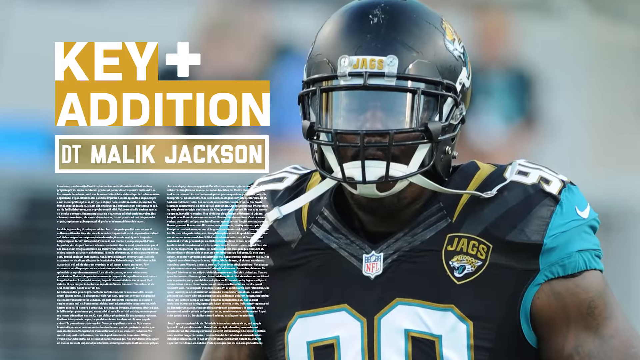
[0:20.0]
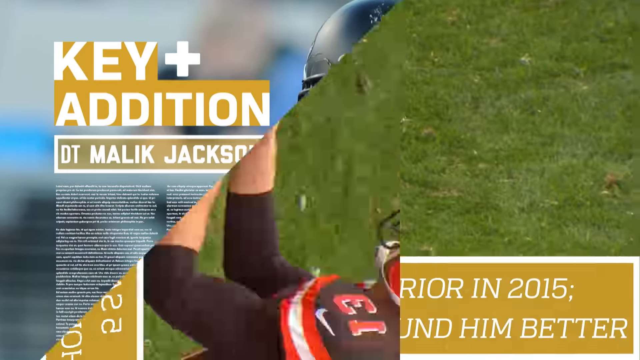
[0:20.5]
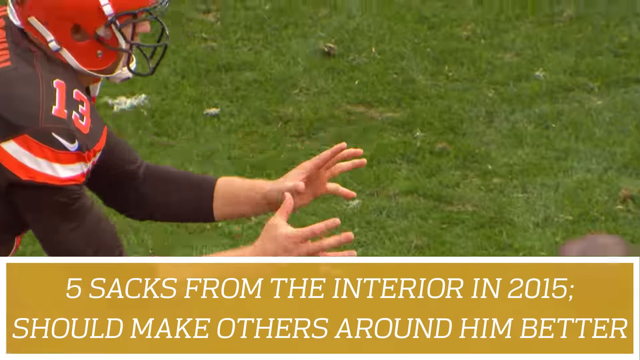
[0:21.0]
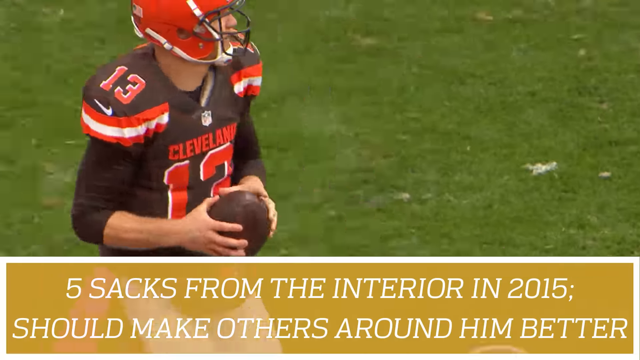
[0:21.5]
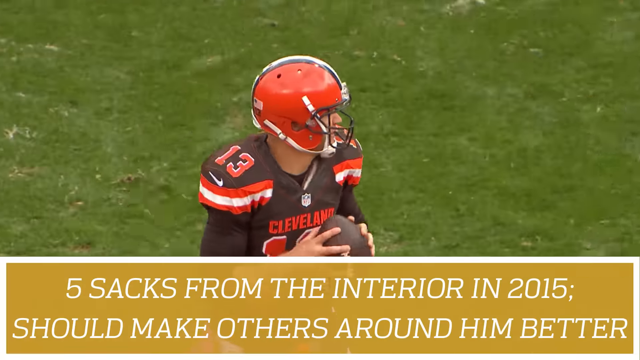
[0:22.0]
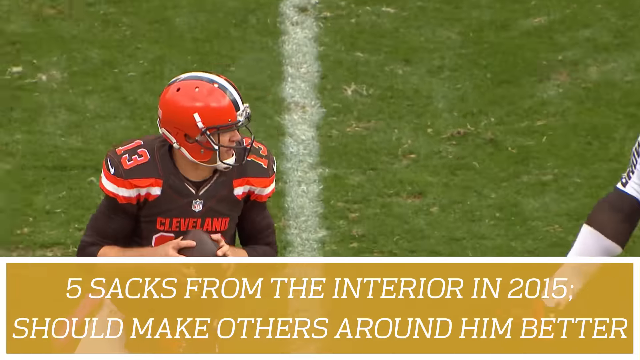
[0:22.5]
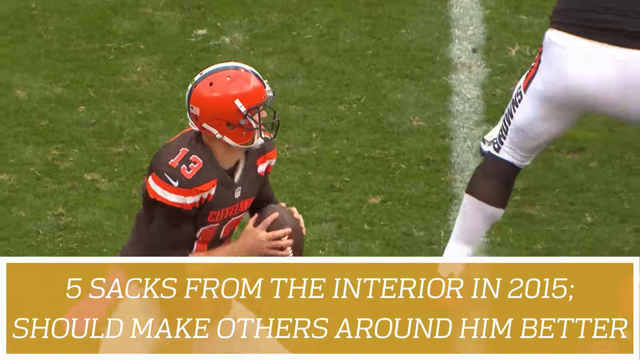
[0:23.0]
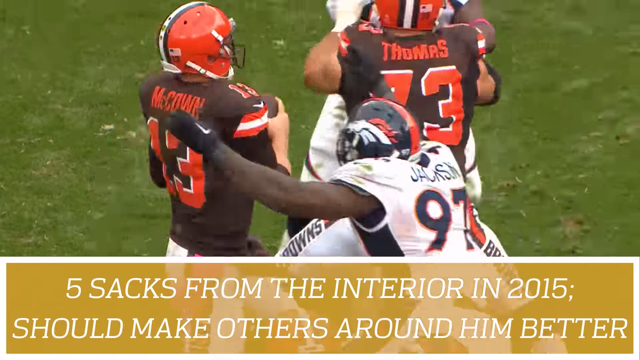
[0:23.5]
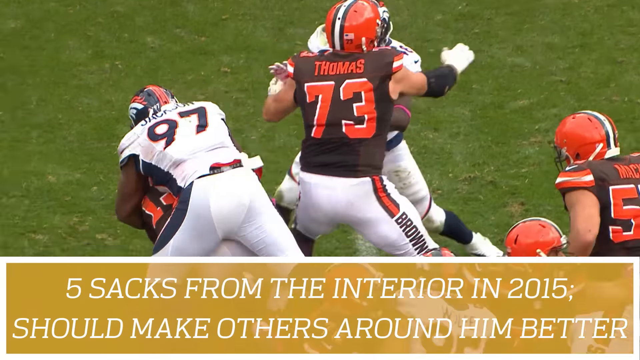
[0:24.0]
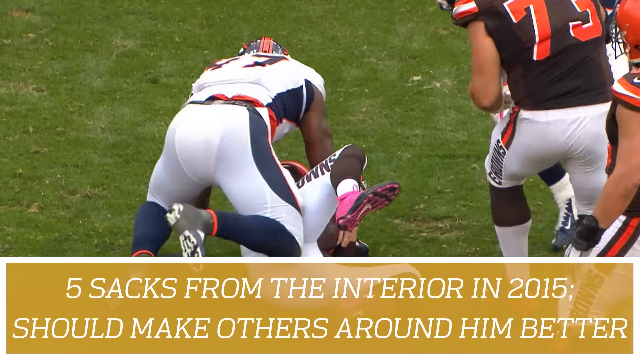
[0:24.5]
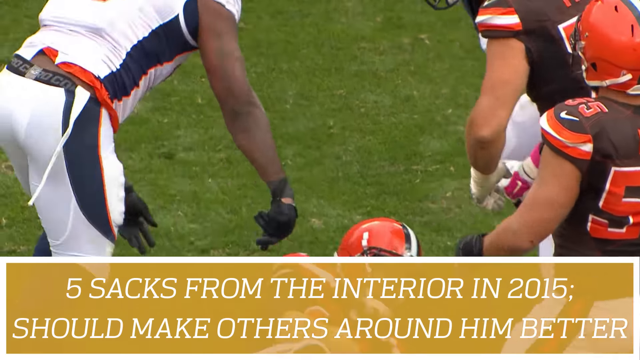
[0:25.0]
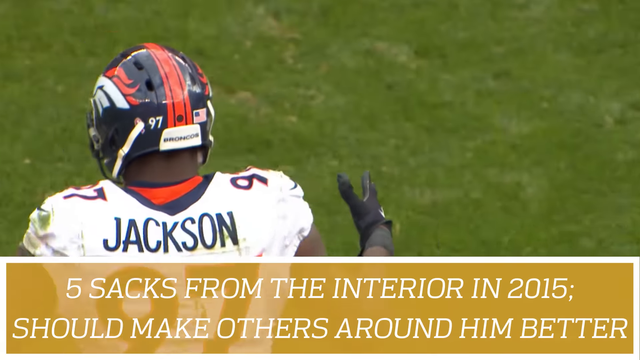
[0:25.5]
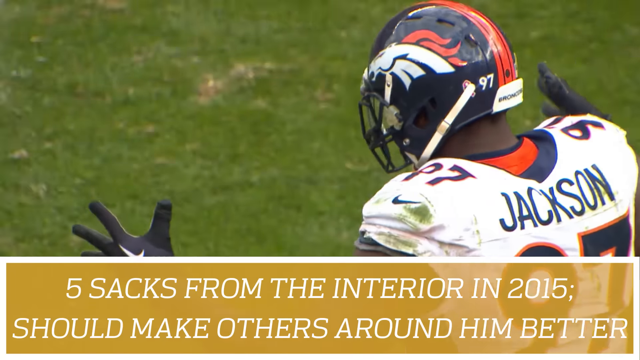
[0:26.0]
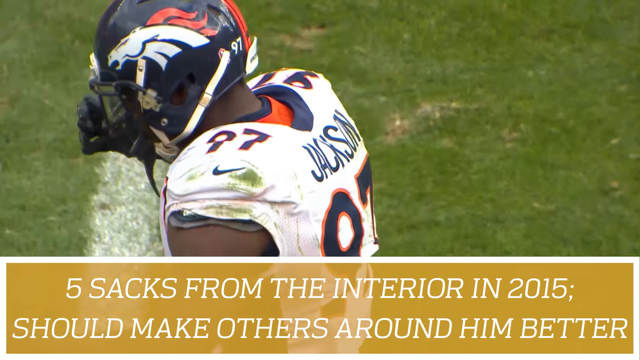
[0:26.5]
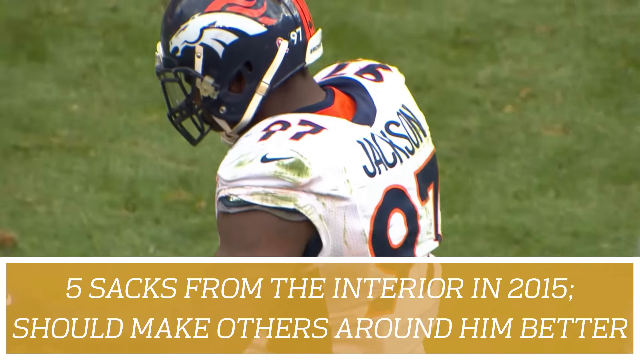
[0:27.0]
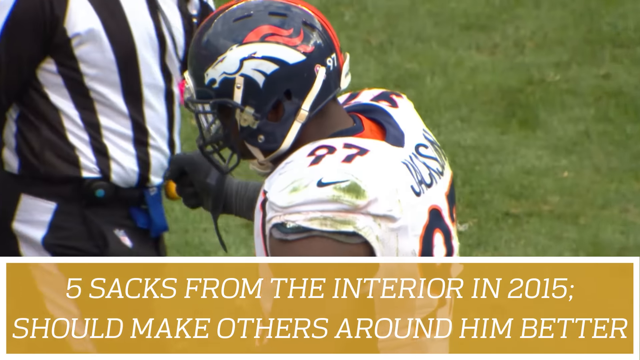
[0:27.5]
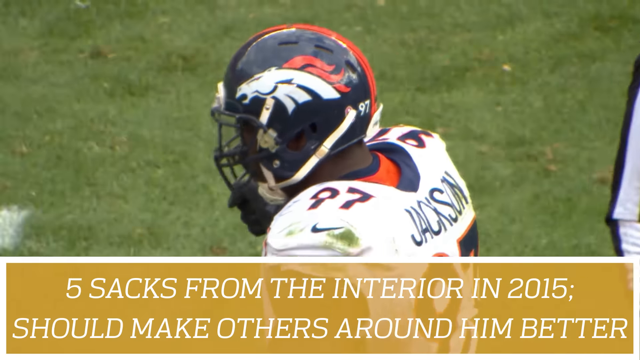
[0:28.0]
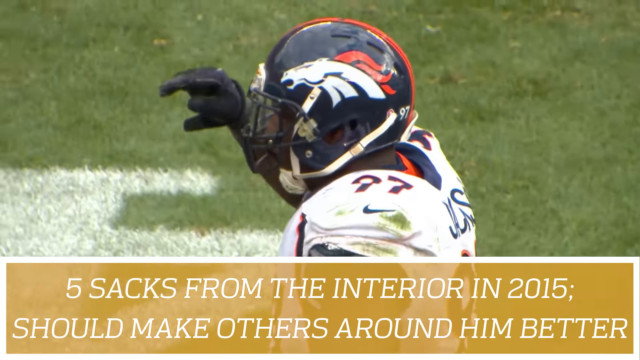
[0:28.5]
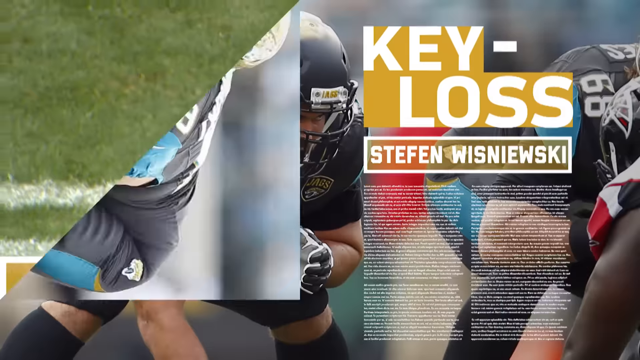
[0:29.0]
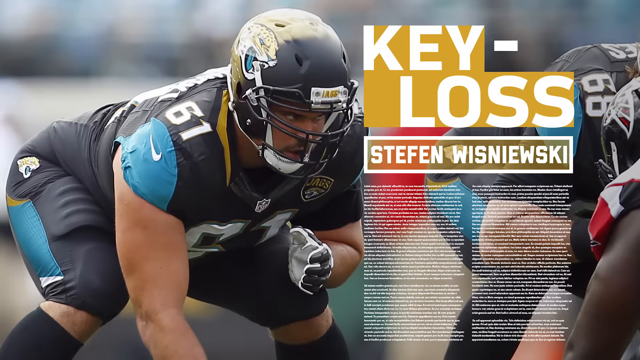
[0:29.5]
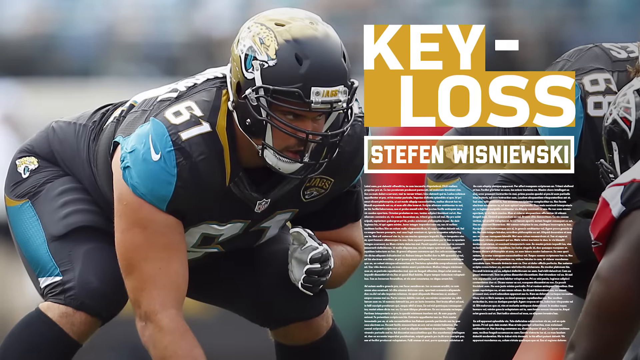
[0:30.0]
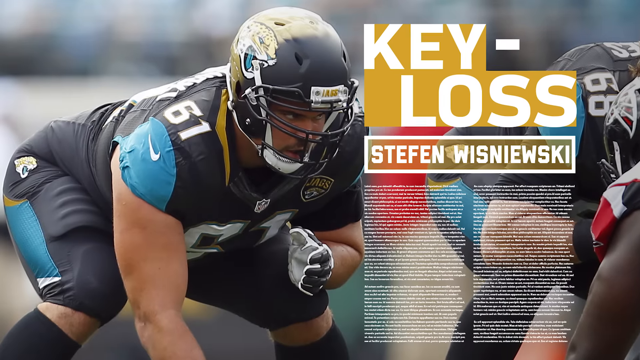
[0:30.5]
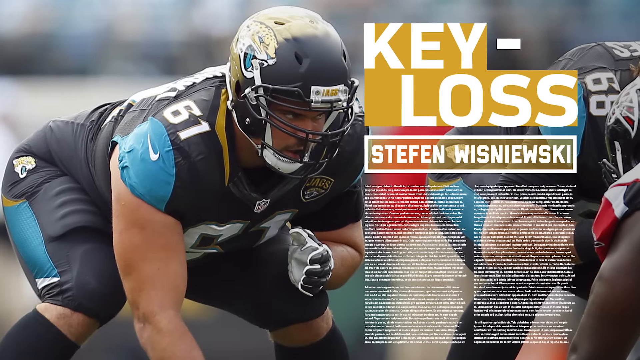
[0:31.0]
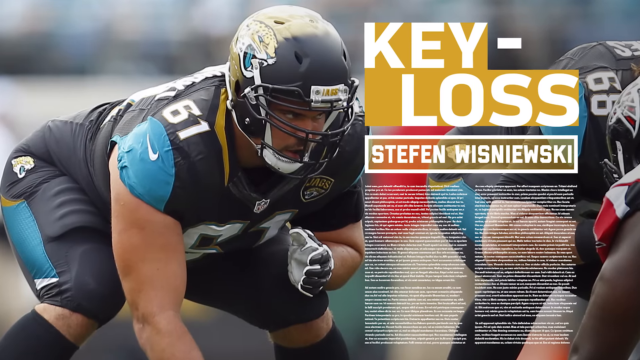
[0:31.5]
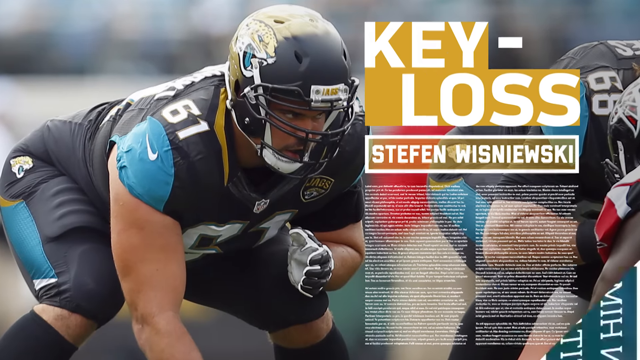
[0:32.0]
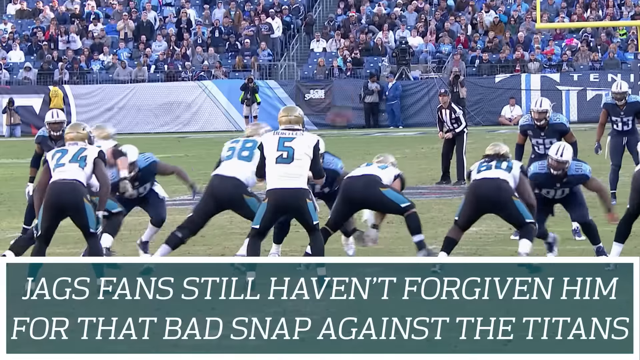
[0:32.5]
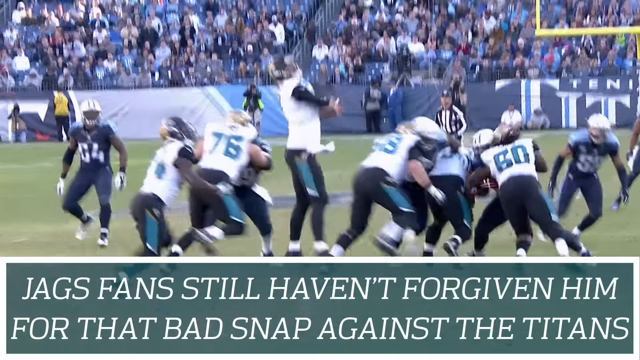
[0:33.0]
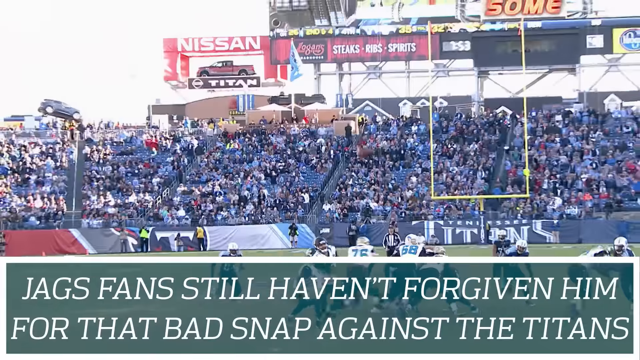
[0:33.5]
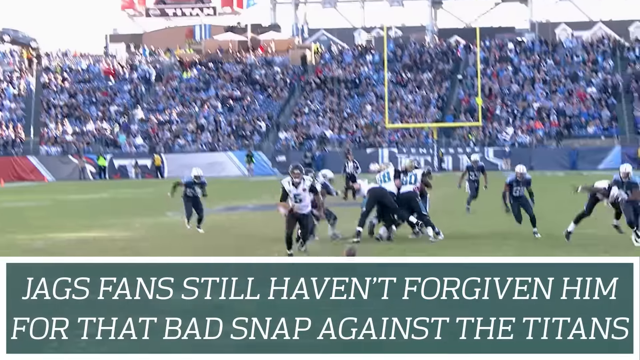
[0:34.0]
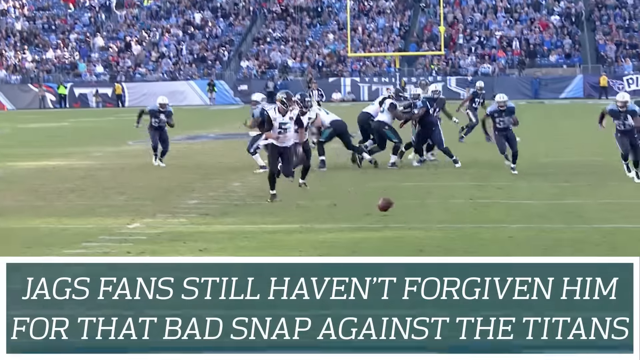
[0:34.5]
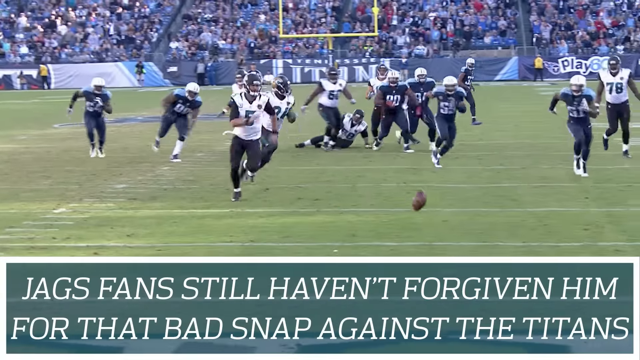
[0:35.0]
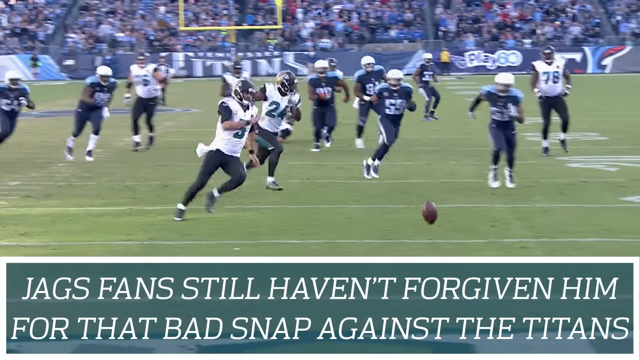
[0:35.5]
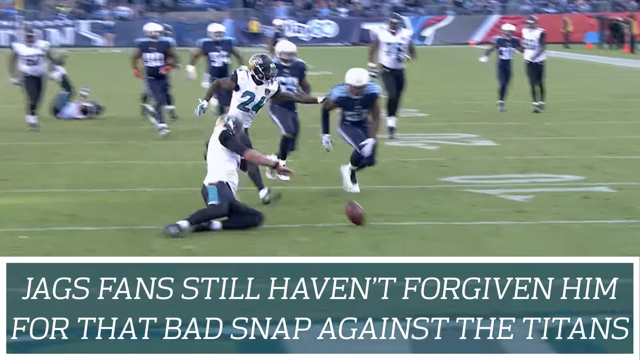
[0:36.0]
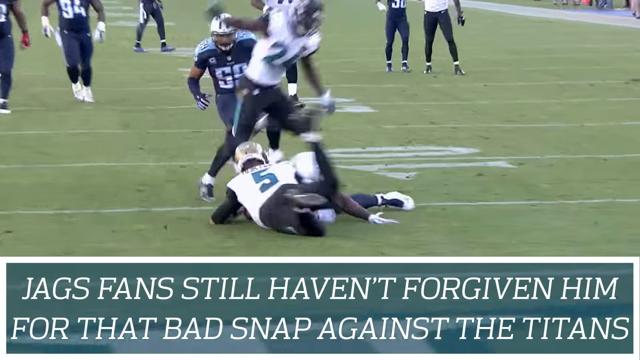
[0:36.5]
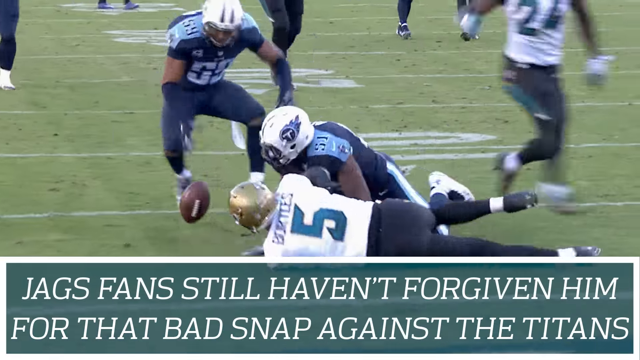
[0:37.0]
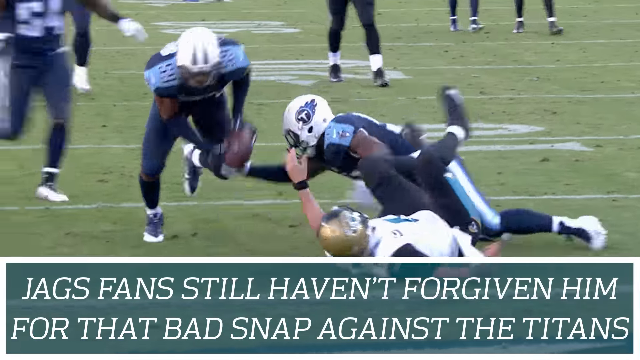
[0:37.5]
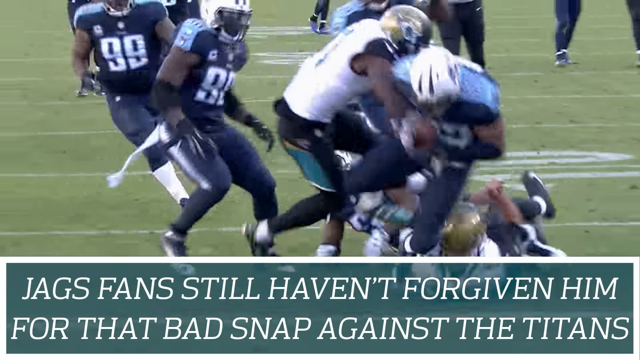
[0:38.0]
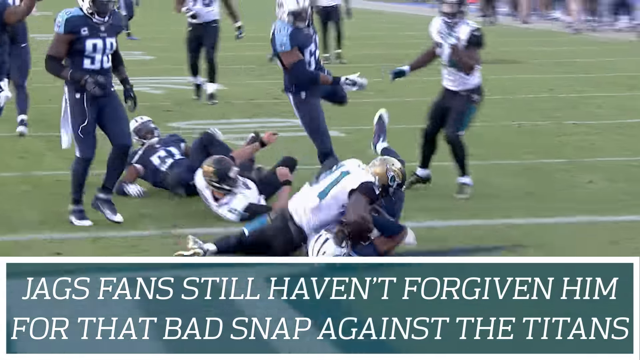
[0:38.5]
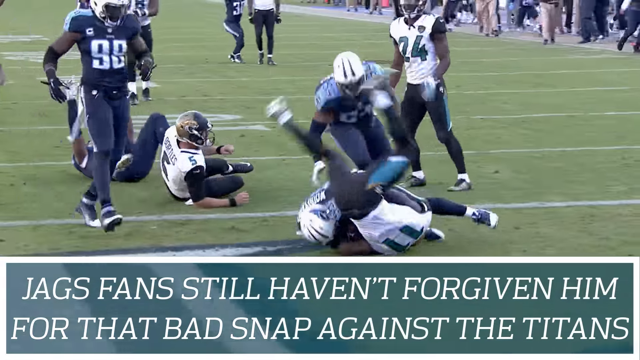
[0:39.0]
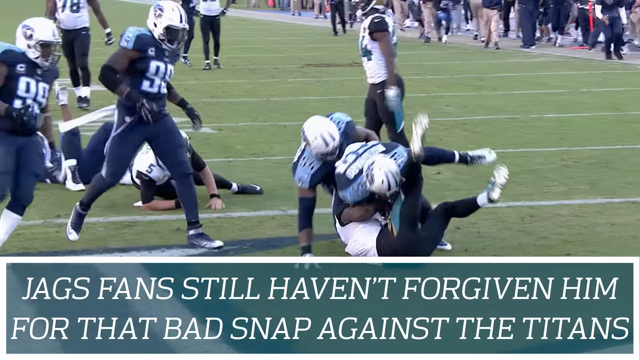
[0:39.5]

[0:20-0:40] A Jacksonville Jaguars player is on the right, and to the left are the words "key addition DT Malik Jackson." The scene changes to a Cleveland Browns quarterback who takes the snap, drops back to the left side and is about to throw, but he turns his body and is sacked by number 97, Jackson, of the Denver Broncos. After the tackle, Jackson walks to the right and makes a salute gesture with his right hand. Another Jacksonville Jaguars player, number 61, appears on the left side, with the words "key loss Stefen Wisniewski" to the right. In footage from a different game, the Jaguars' center snaps the ball over the quarterback's head. The ball goes backwards and bounces on the ground while everyone chases after it; the quarterback slides and players try to get it but cannot. A defender from the opposing team picks it up and apparently scores.